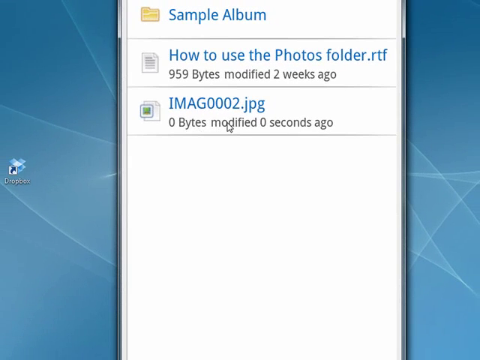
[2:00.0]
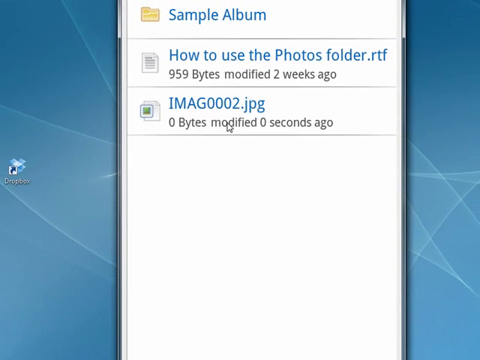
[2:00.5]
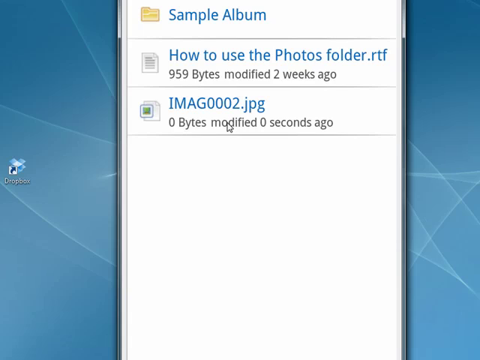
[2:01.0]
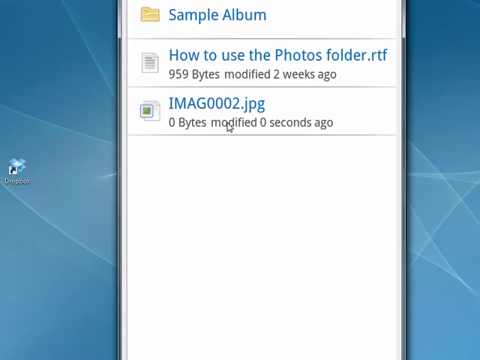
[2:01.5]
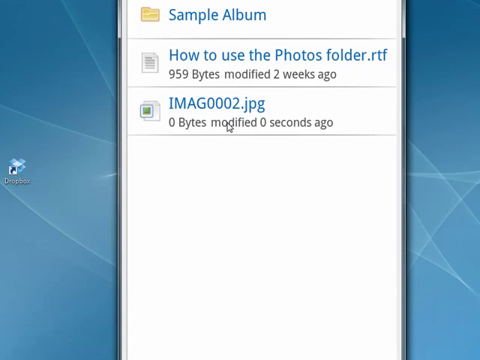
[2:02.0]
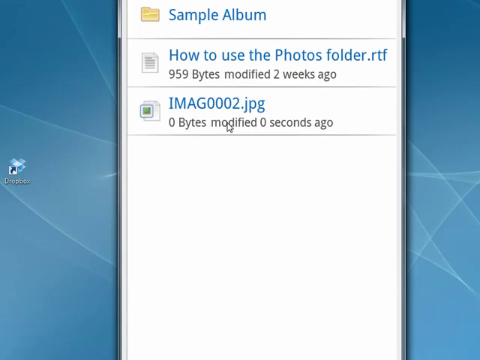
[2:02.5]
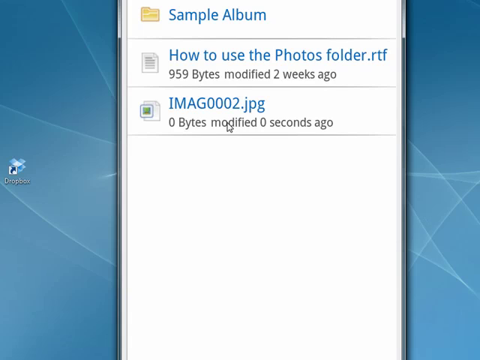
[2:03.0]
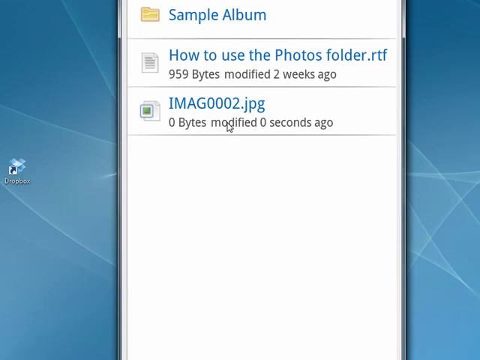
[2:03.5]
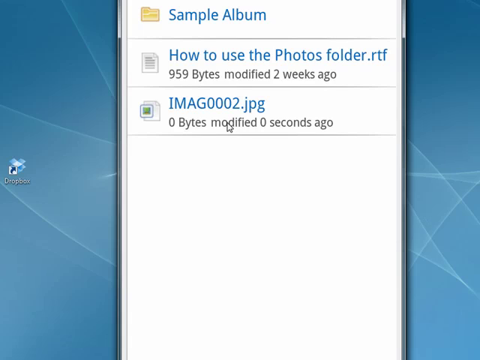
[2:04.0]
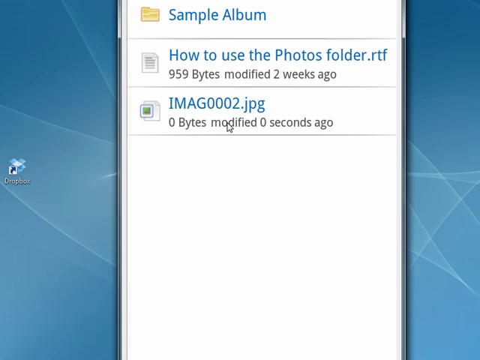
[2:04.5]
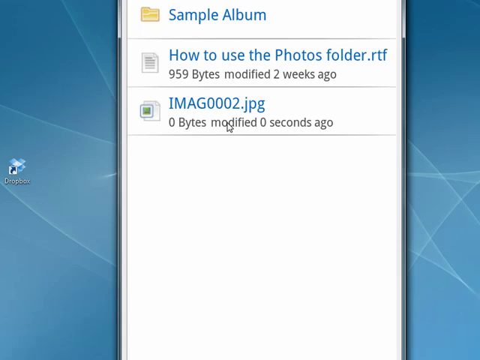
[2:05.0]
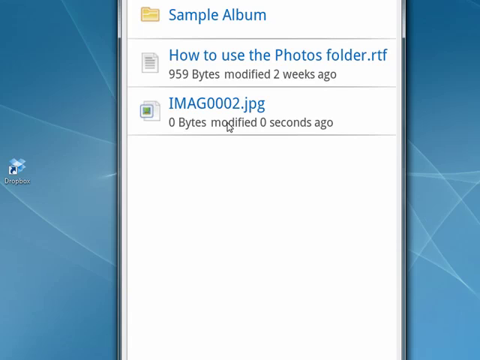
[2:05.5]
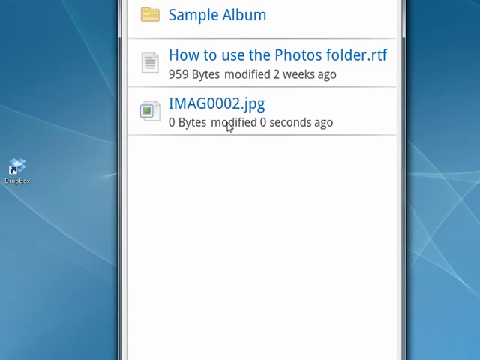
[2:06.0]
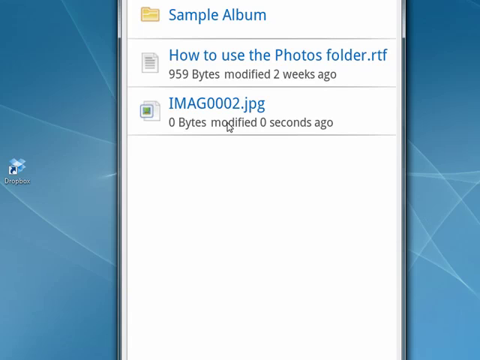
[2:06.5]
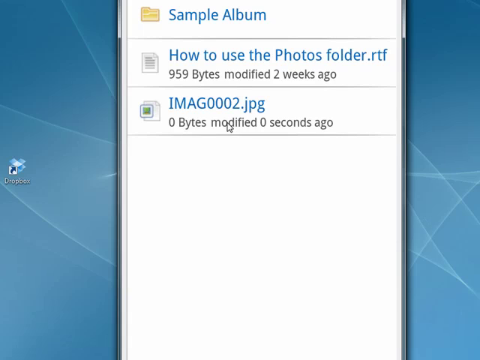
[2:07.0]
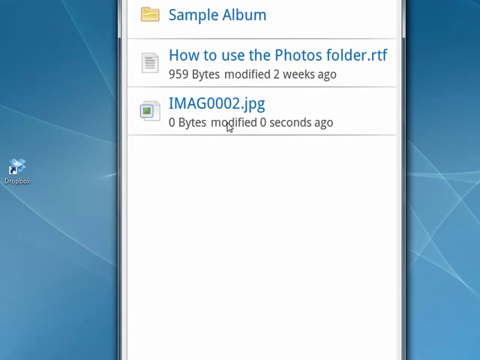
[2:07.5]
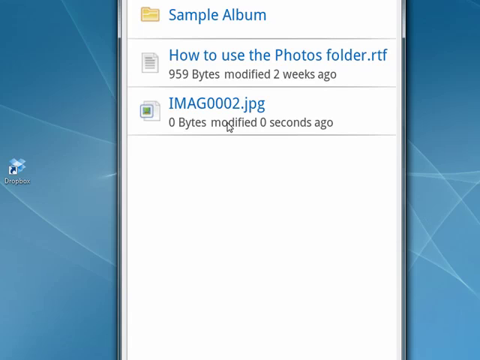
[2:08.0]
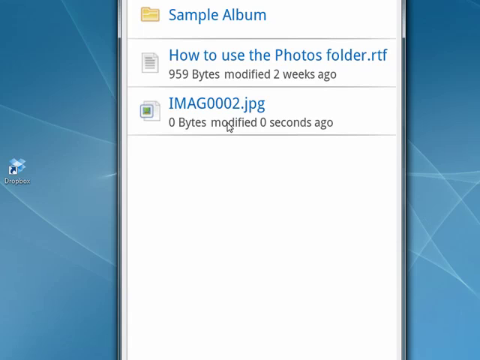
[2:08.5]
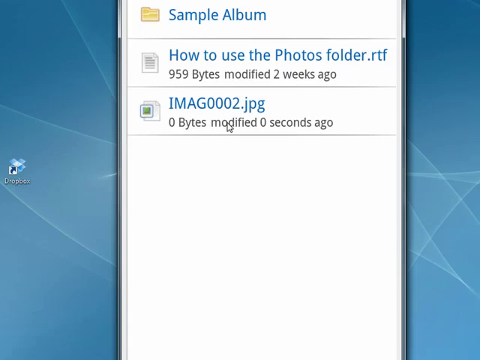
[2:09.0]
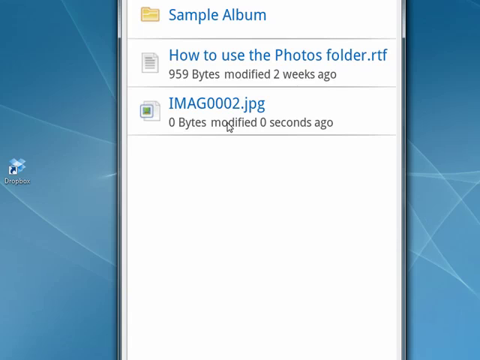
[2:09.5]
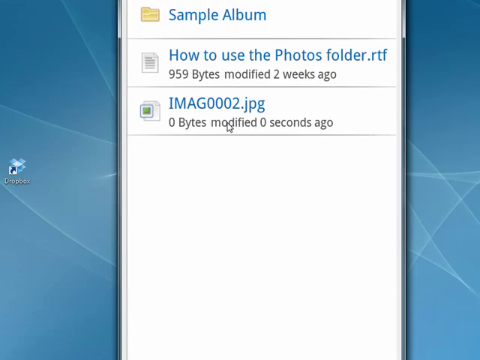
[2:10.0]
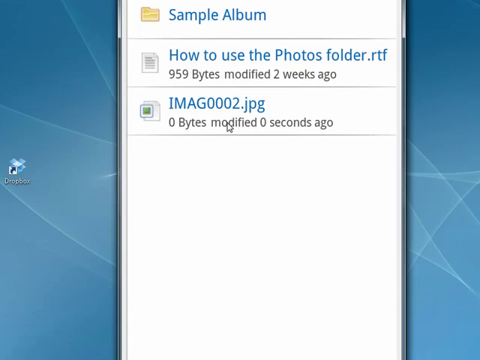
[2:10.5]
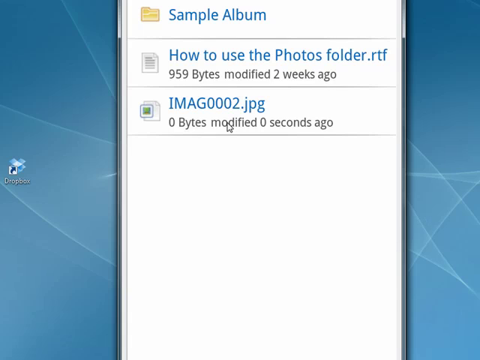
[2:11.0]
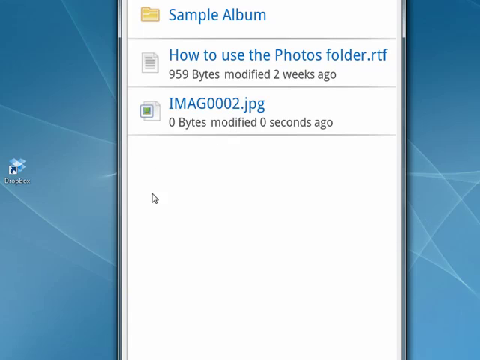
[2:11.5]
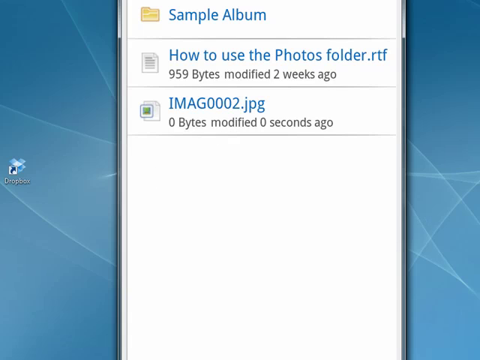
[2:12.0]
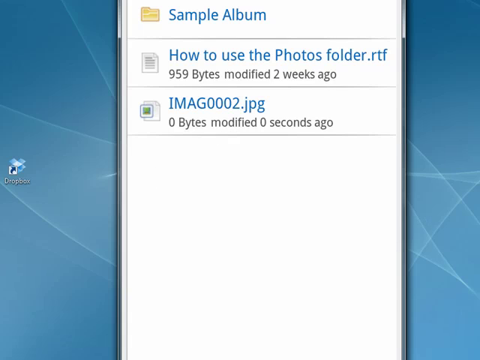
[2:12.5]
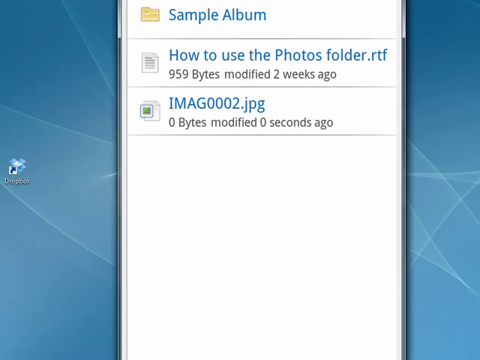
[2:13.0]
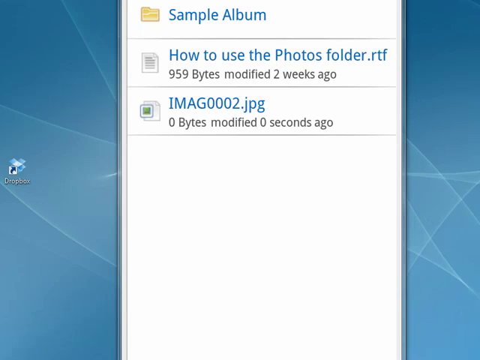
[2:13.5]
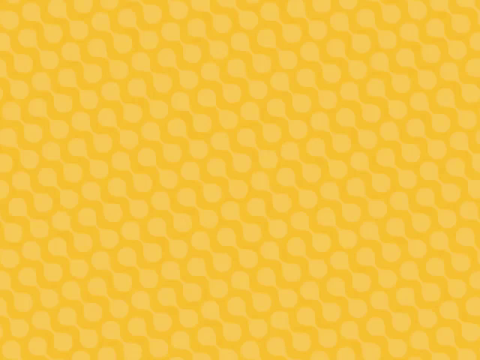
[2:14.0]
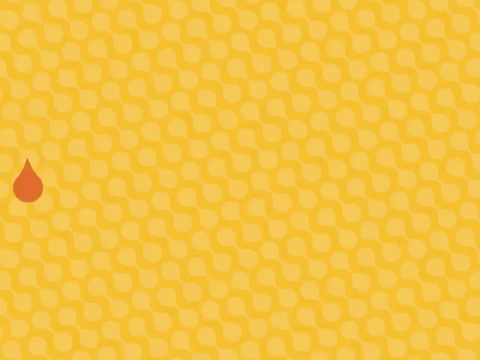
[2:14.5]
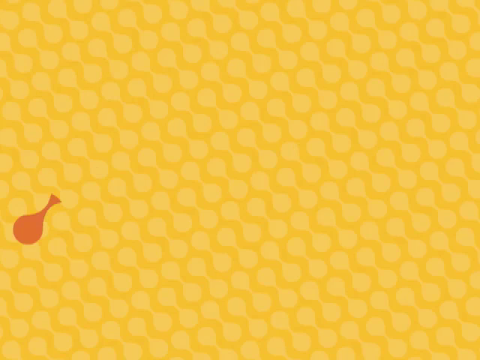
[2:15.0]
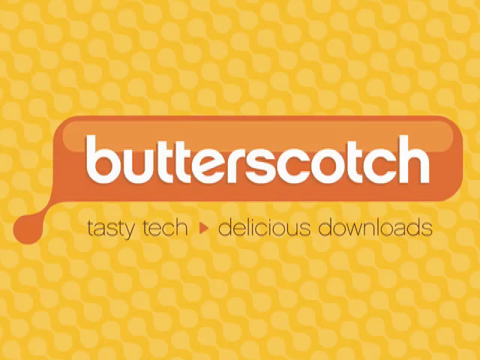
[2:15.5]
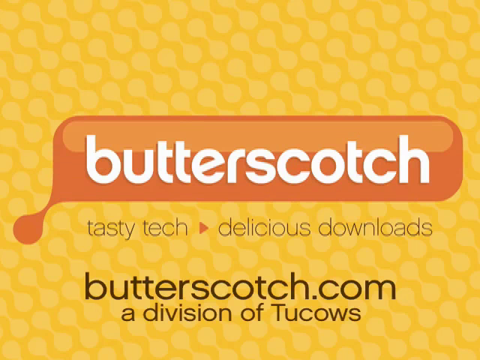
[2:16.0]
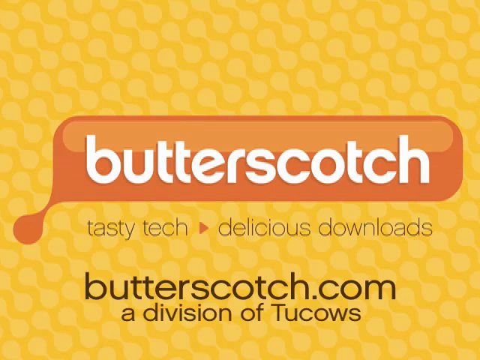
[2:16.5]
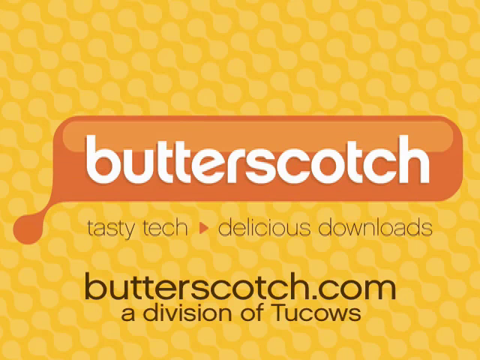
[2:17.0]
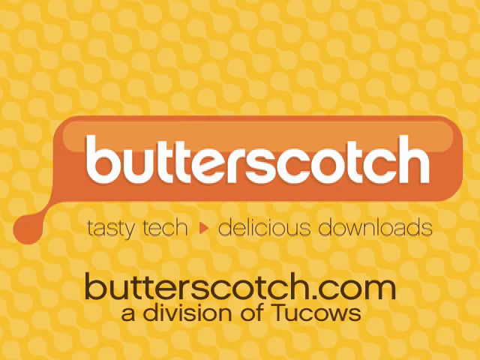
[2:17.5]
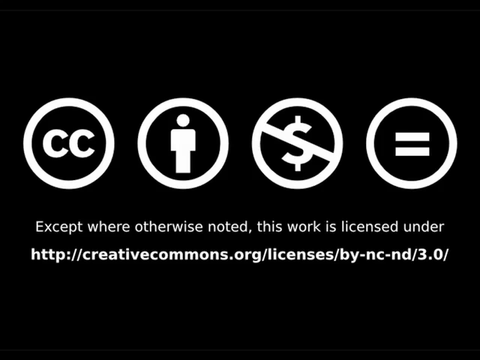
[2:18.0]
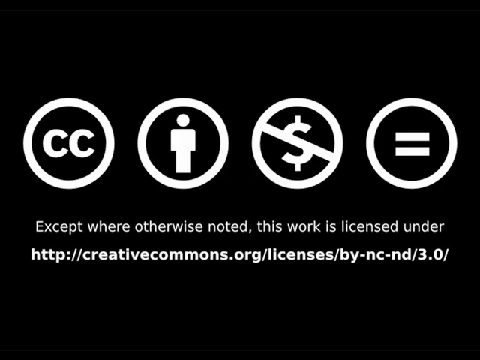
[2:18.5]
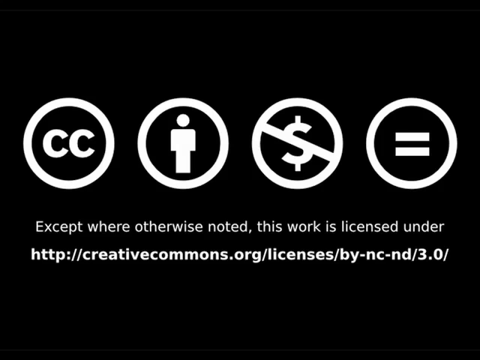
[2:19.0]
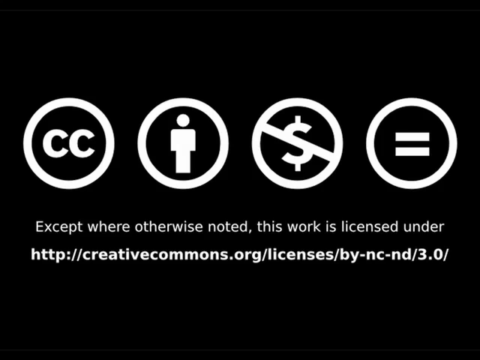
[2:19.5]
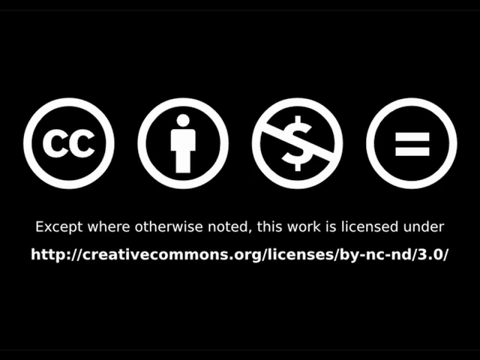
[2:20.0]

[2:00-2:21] The three options remain on screen: the sample album; "how to use the photos folder.rtf", with "959 bytes" and modified two weeks ago beneath it; and "imag0002.jpg", with "zero bytes modified zero seconds ago" beneath it. Each has an icon: the sample album has a file folder, the how-to-use file has something like a lined sheet of paper, and the imag file has a blank sheet of paper with a picture over it. The video then goes back to the intro from the beginning, which looks like a digital version of a honeycomb. The text box comes up with "butterscotch" in it, followed by "Tasty Tech Delicious Downloads".